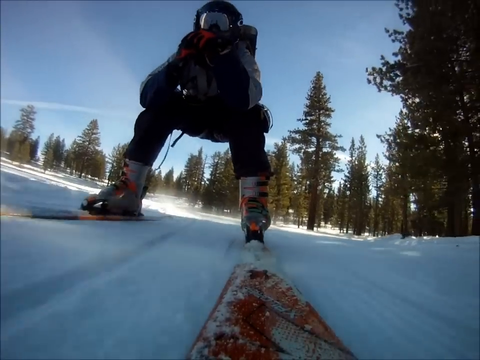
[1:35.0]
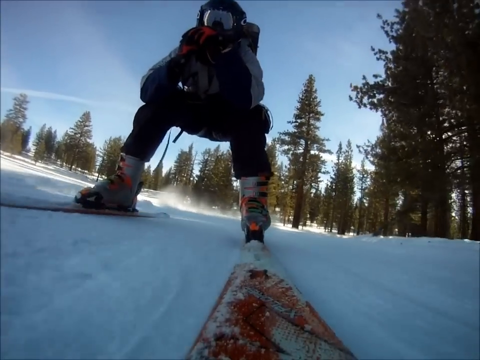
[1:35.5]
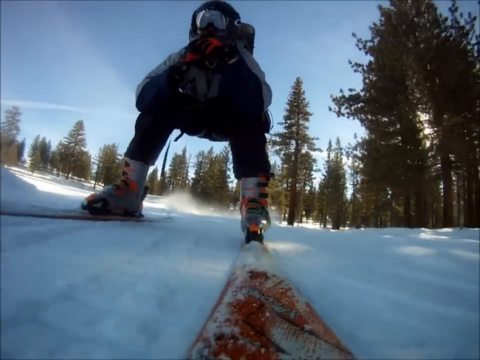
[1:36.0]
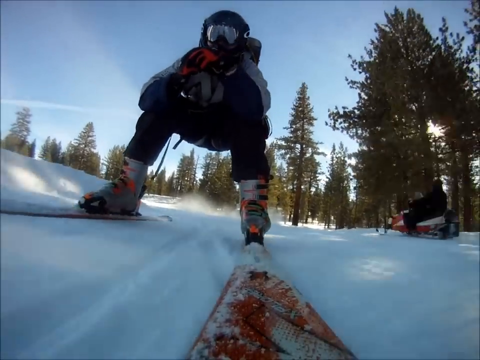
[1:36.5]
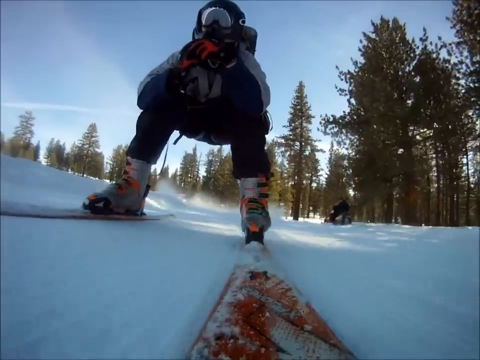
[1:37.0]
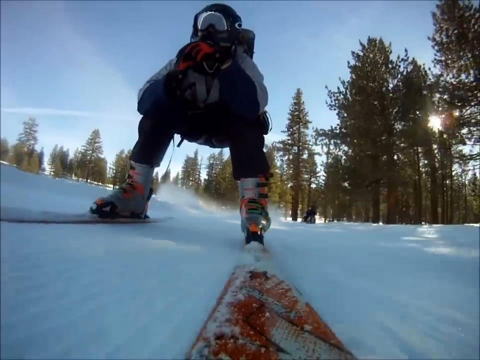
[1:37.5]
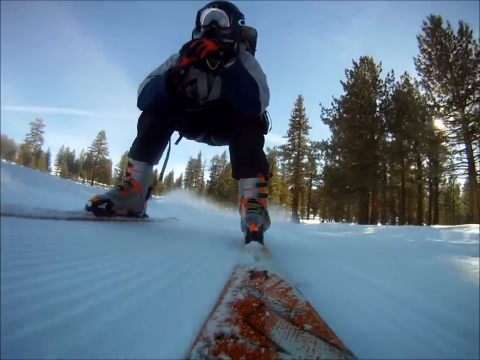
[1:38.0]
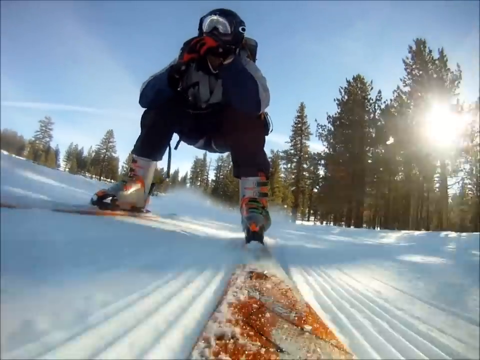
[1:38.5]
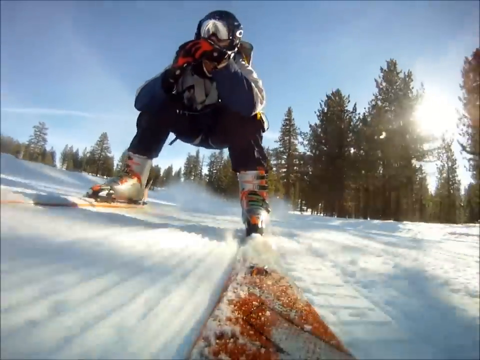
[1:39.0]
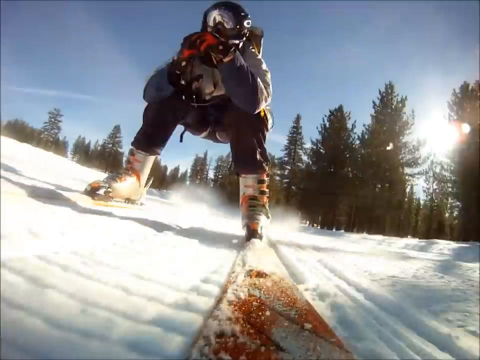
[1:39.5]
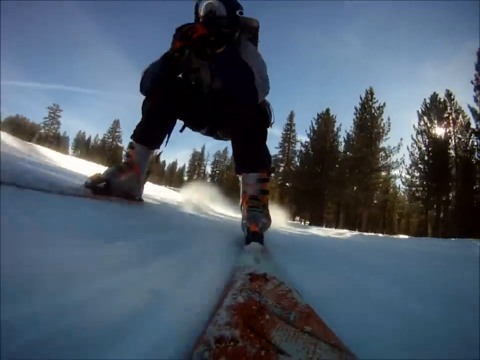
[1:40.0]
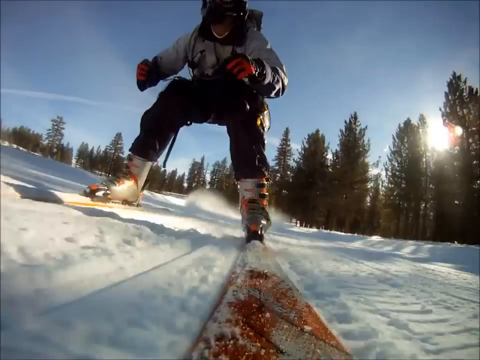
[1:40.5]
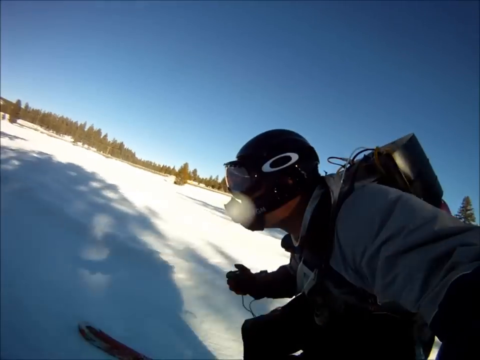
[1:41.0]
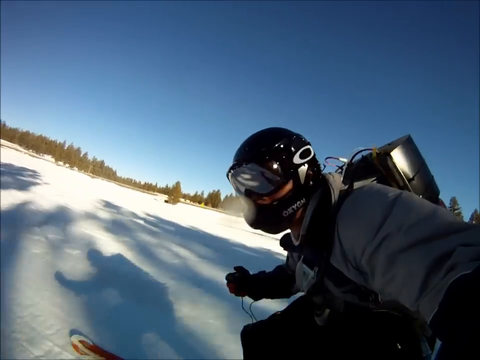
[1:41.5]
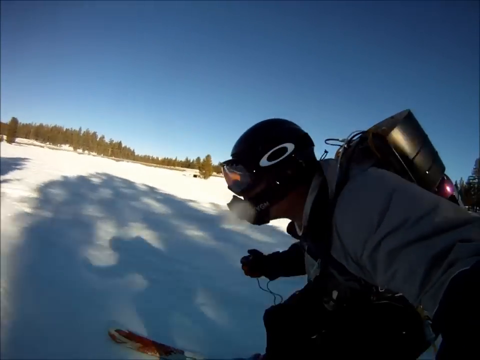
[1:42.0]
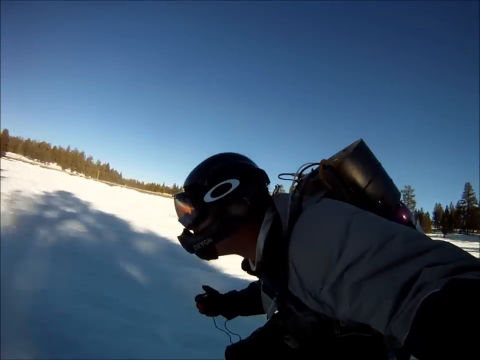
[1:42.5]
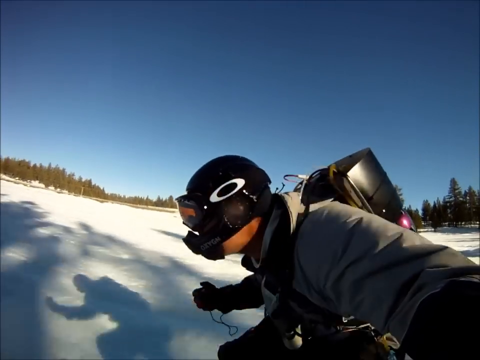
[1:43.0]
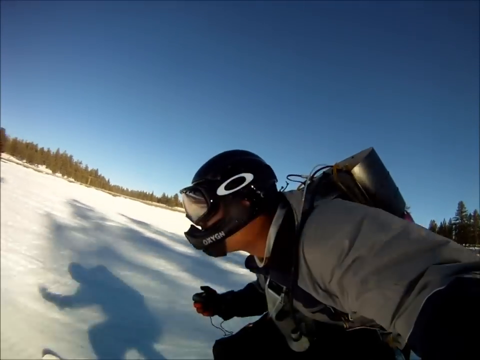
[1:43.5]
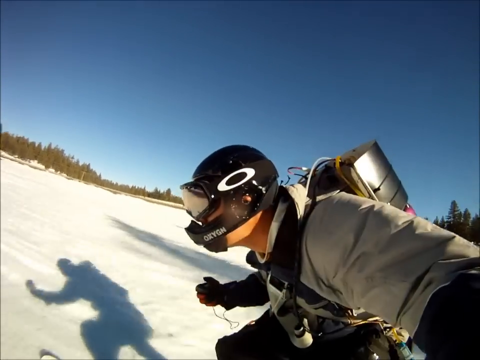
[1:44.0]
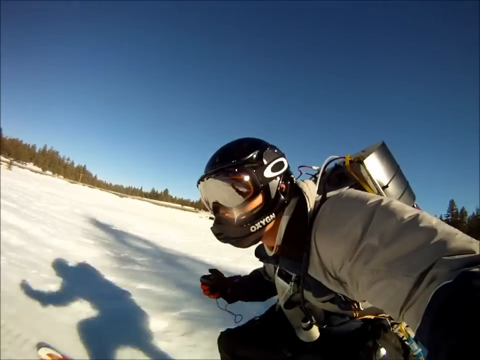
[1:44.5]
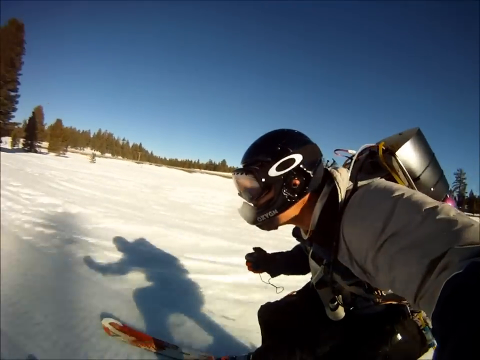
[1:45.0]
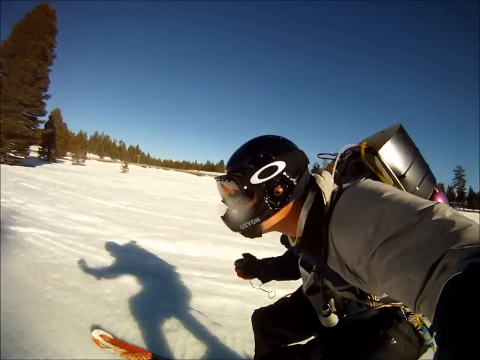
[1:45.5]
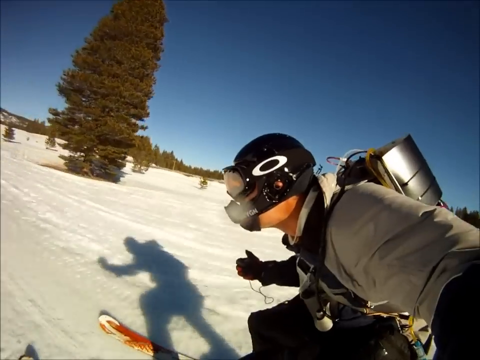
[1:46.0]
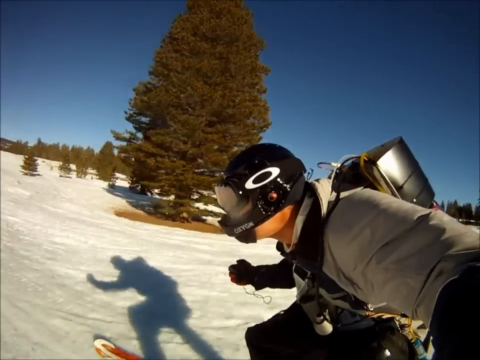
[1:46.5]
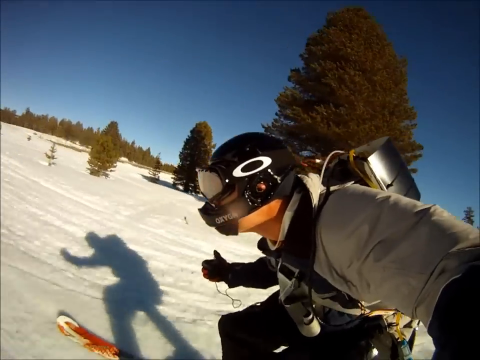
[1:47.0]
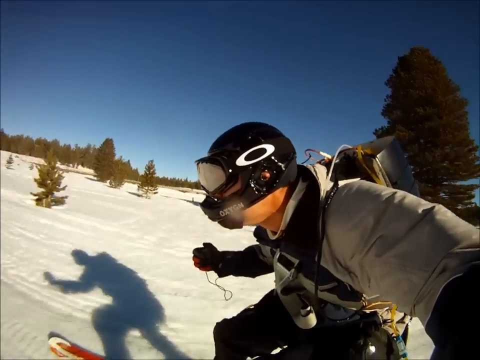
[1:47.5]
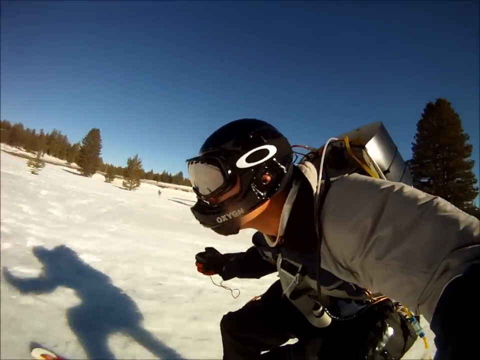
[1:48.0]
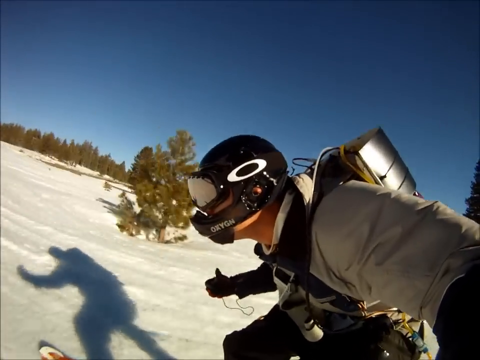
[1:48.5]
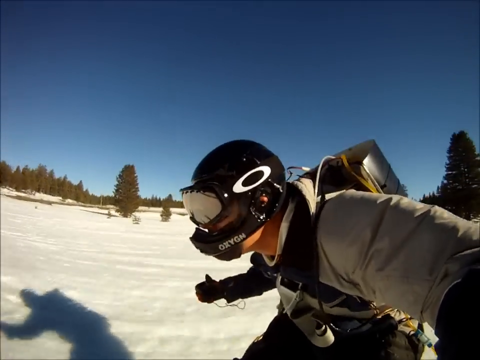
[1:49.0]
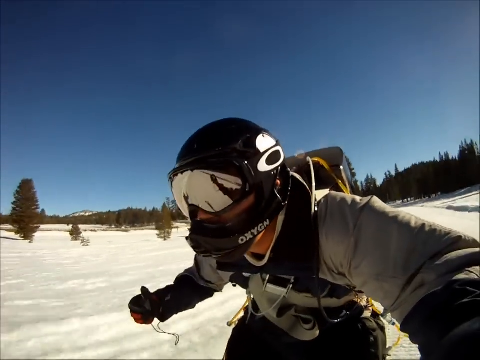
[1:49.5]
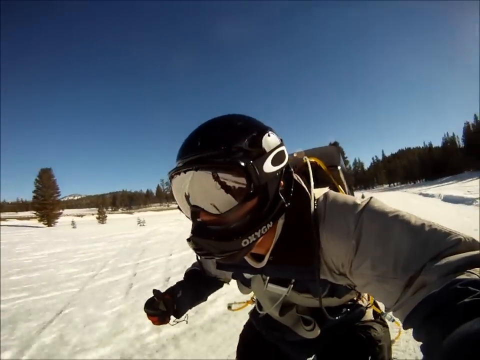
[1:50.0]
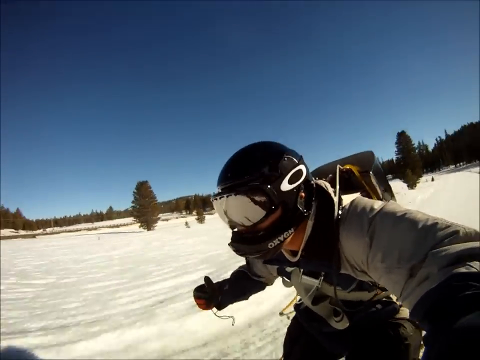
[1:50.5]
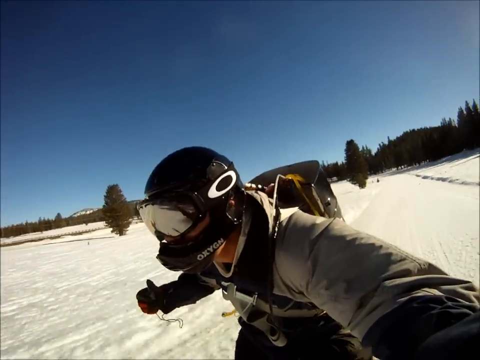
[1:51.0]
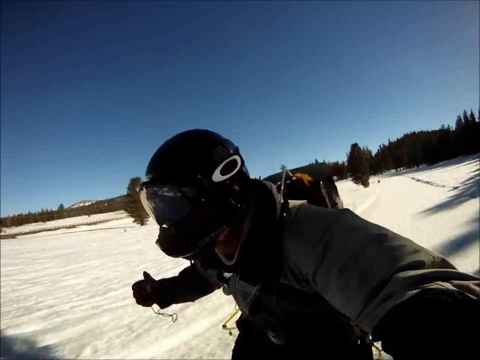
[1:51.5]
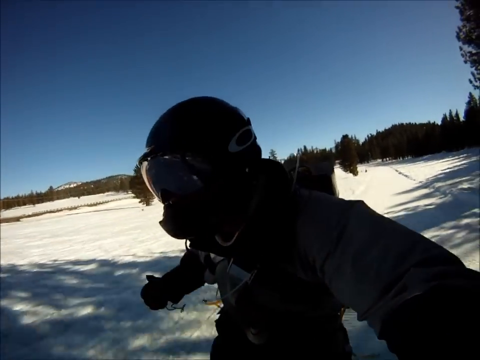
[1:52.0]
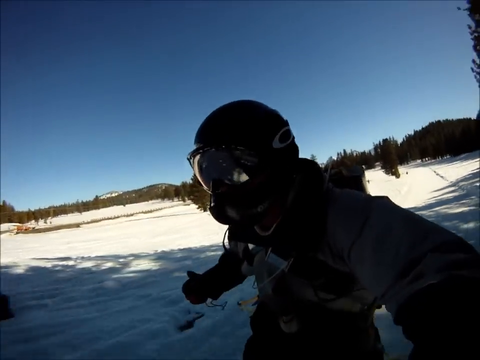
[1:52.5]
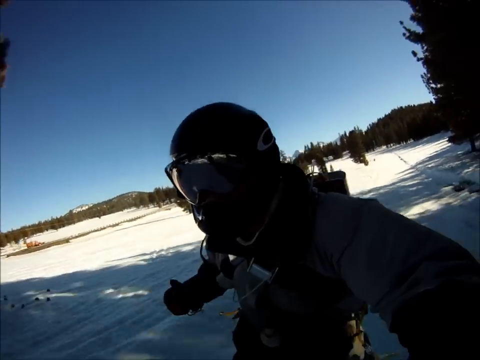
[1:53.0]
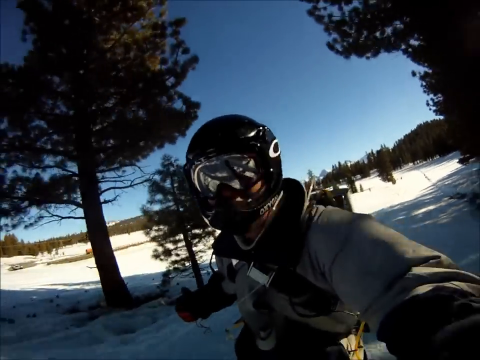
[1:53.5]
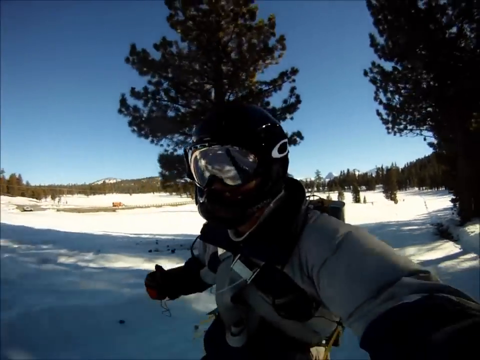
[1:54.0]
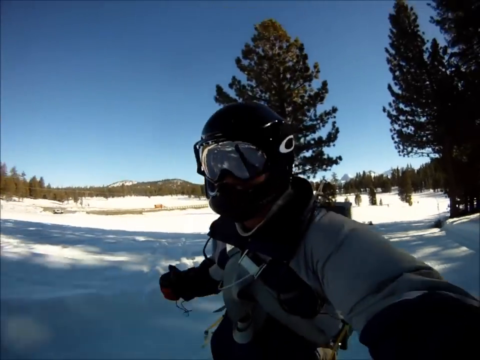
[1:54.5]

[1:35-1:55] The view is from the left ski, then from what is apparently the camera he holds in his left hand, showing him prominently with his shadow on the snow behind him. He passes somebody at the side, possibly on a snowmobile. He is no longer crouched over as much, possibly just coasting. No flames or anything are seen coming out of the jet pack. He is still going very fast, and the ground still seems more or less level. The shots mostly show him sliding on white snow with fields or forests around.